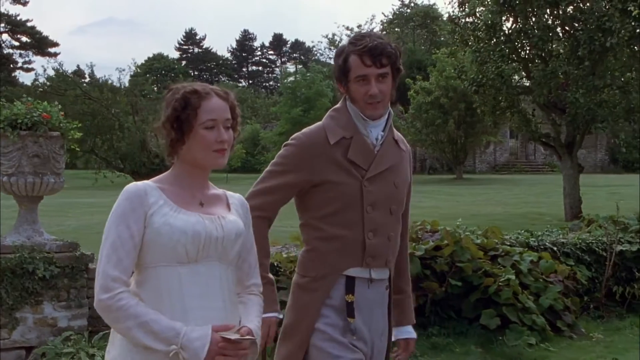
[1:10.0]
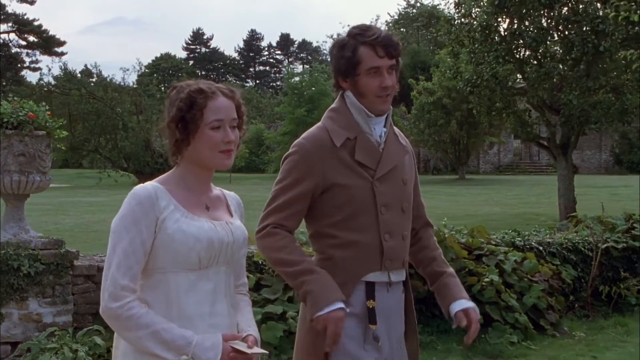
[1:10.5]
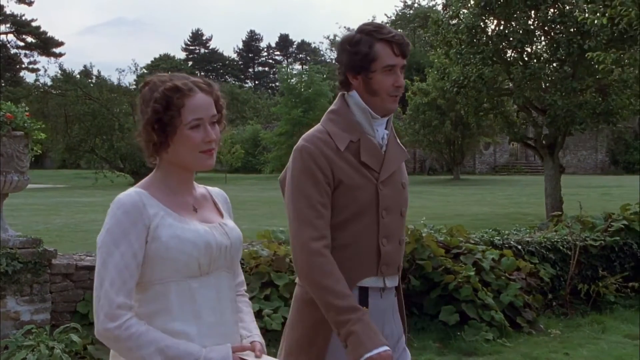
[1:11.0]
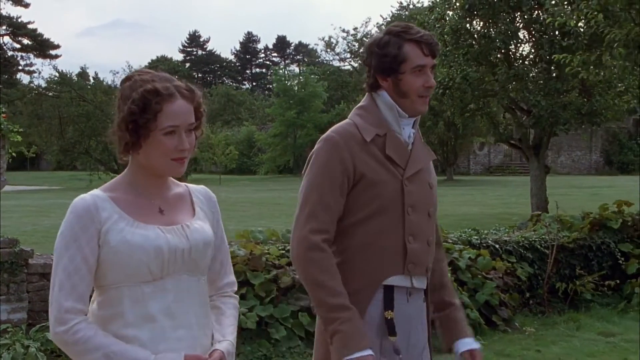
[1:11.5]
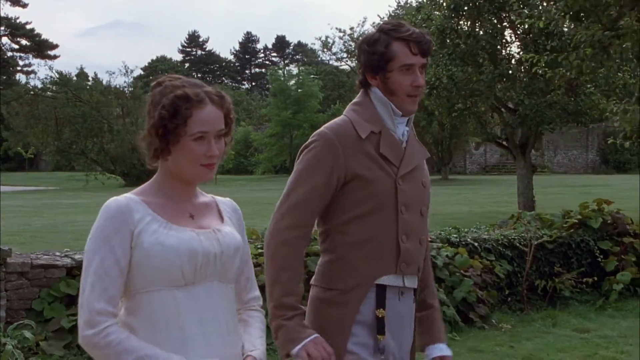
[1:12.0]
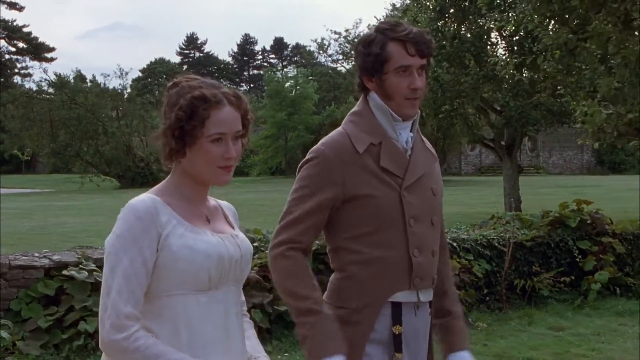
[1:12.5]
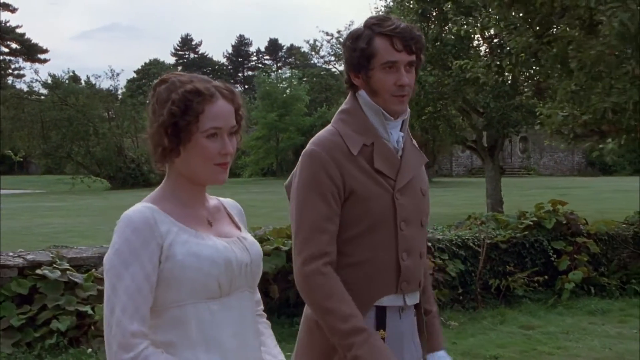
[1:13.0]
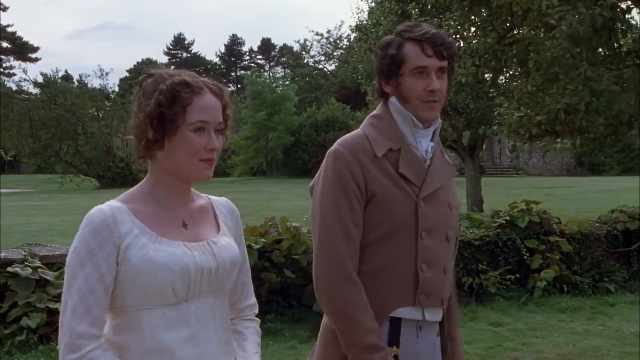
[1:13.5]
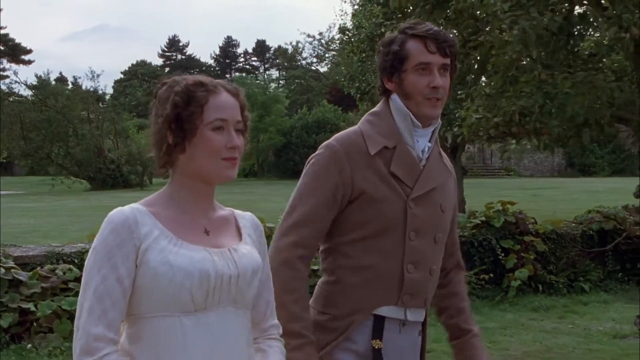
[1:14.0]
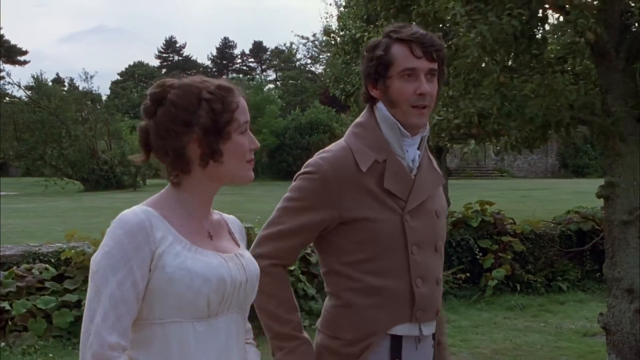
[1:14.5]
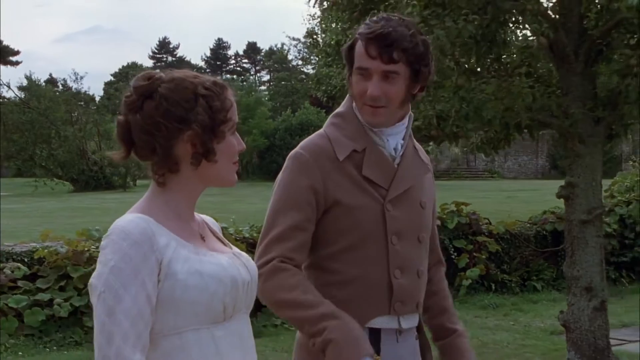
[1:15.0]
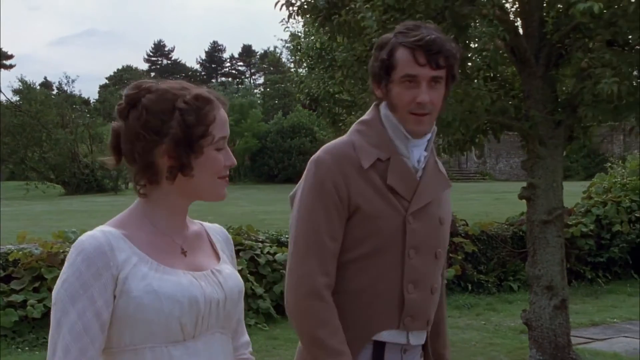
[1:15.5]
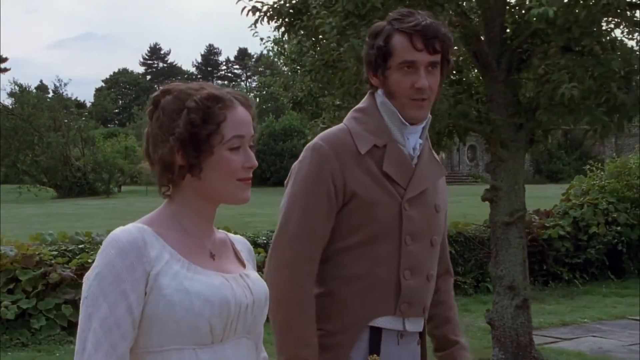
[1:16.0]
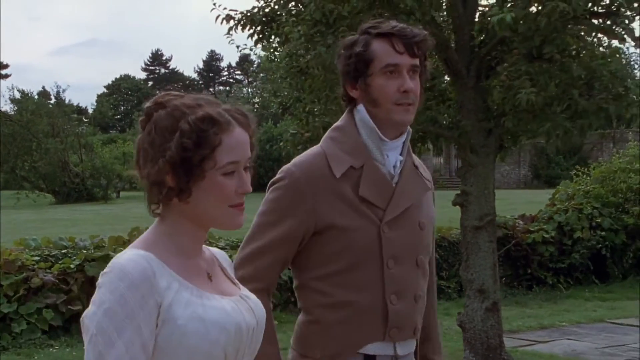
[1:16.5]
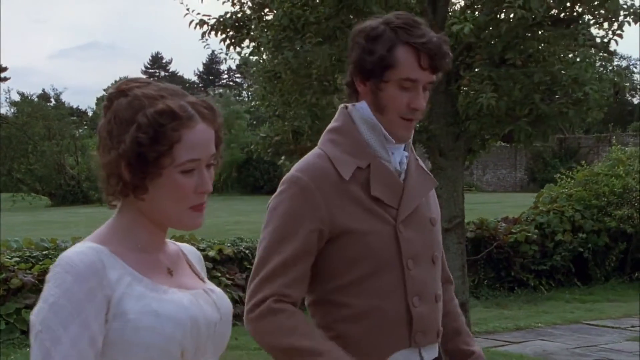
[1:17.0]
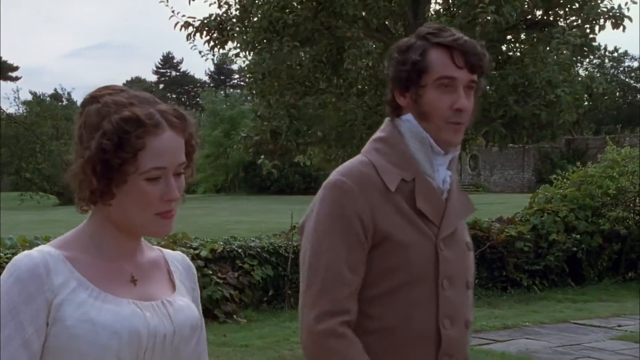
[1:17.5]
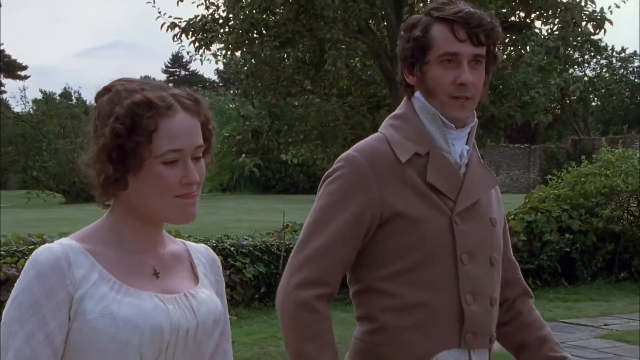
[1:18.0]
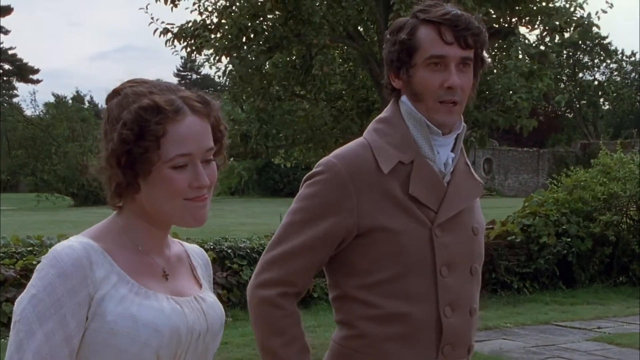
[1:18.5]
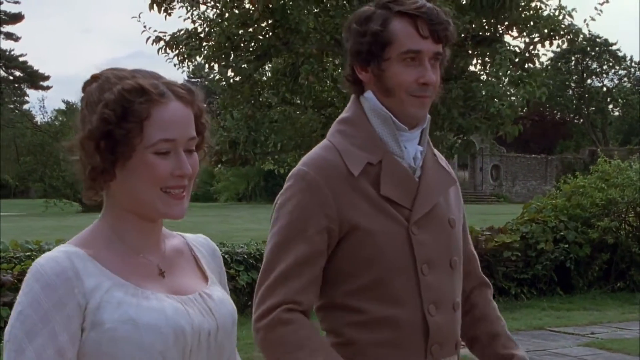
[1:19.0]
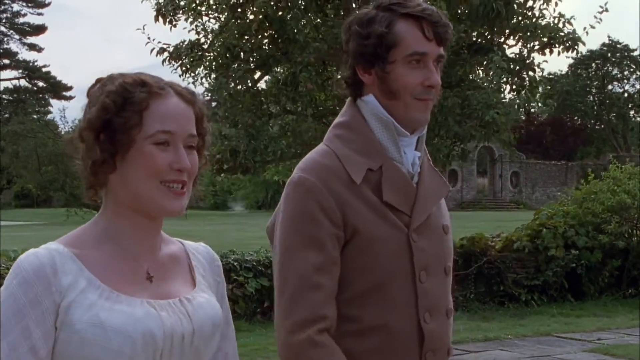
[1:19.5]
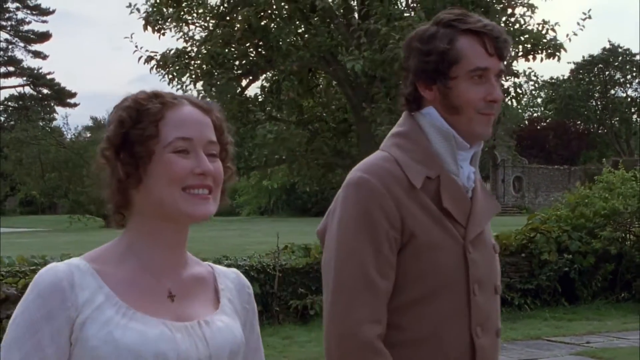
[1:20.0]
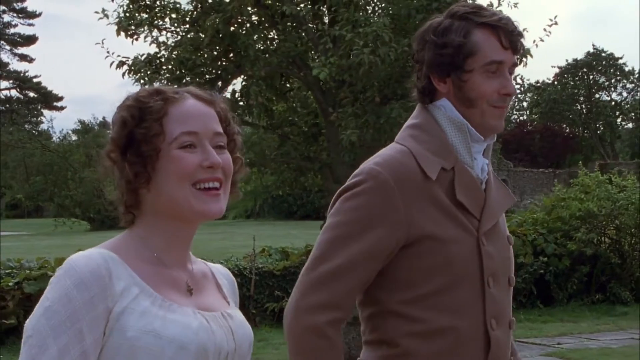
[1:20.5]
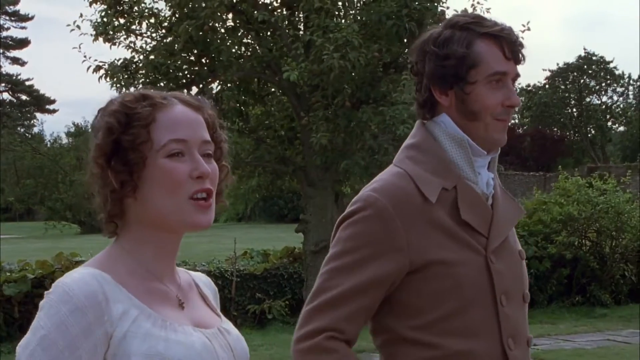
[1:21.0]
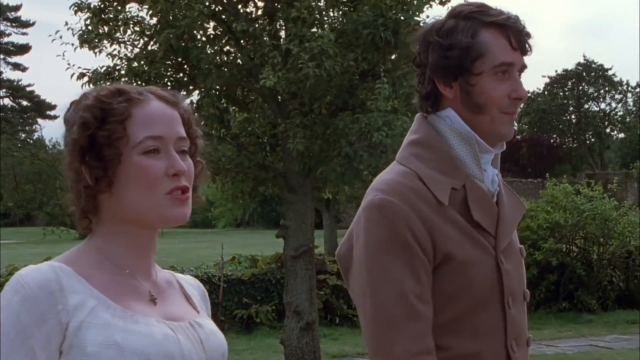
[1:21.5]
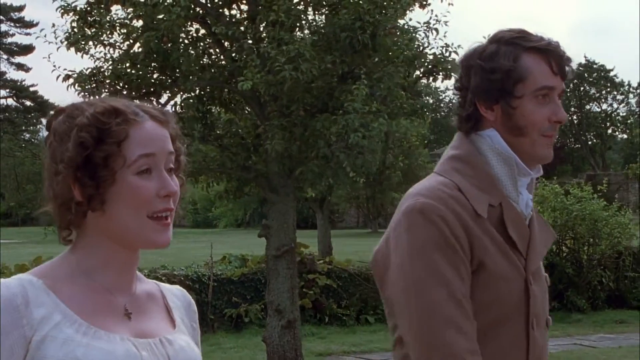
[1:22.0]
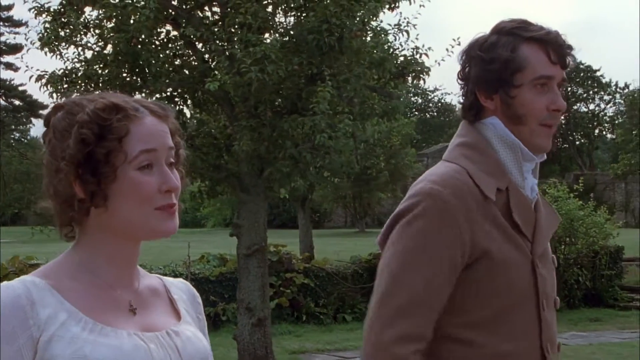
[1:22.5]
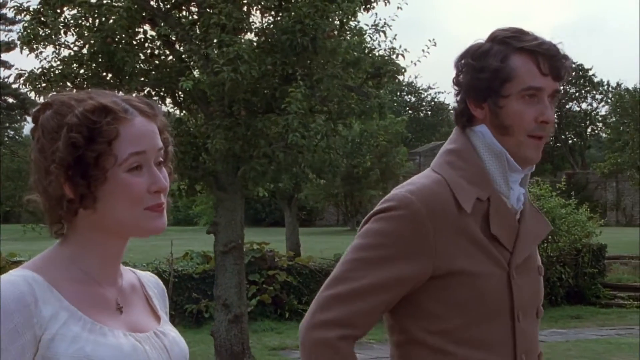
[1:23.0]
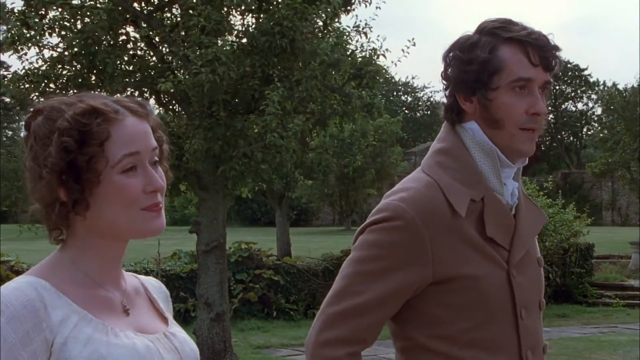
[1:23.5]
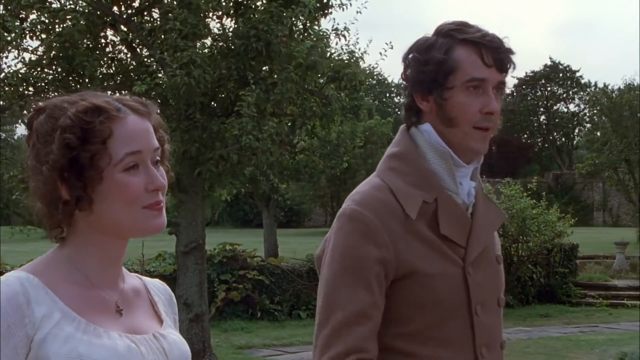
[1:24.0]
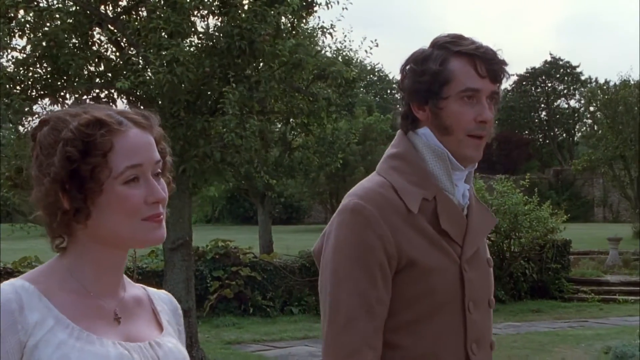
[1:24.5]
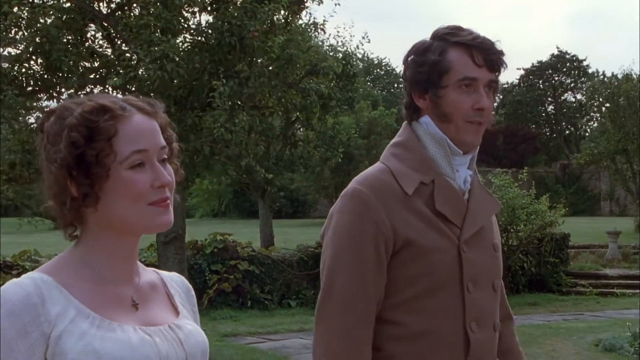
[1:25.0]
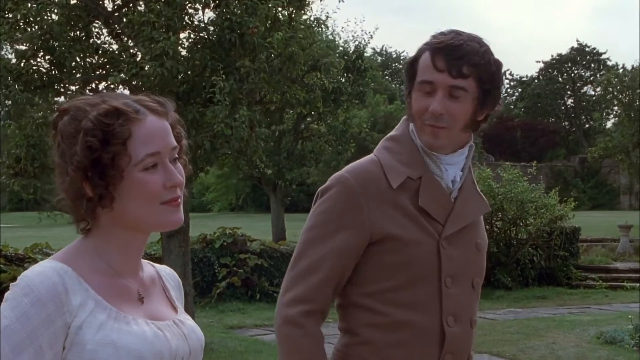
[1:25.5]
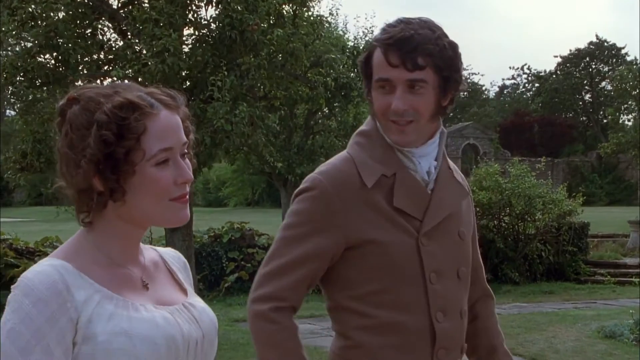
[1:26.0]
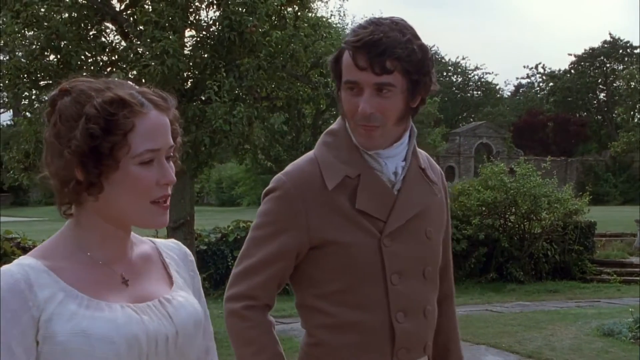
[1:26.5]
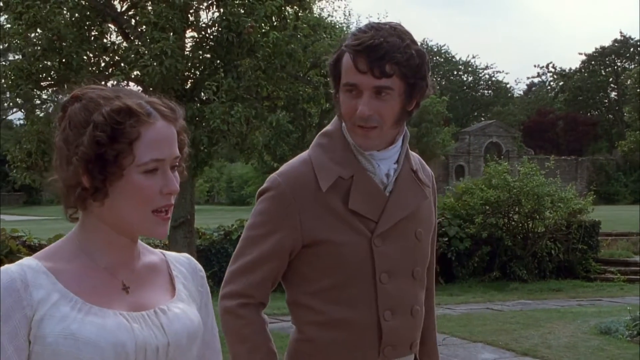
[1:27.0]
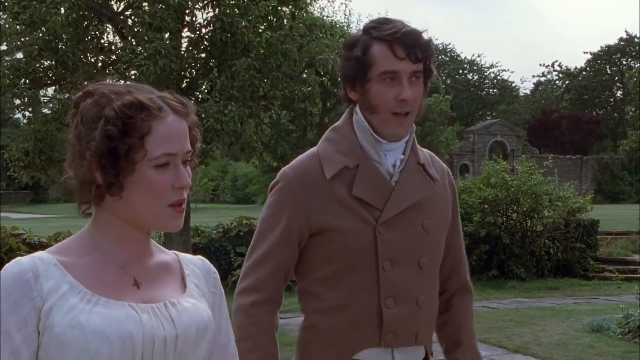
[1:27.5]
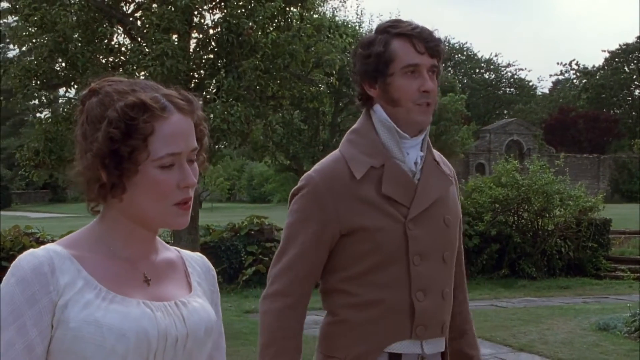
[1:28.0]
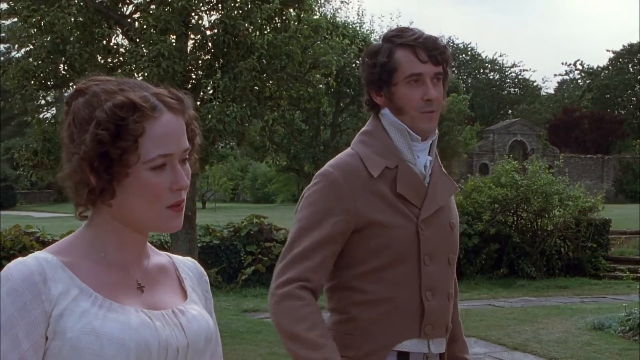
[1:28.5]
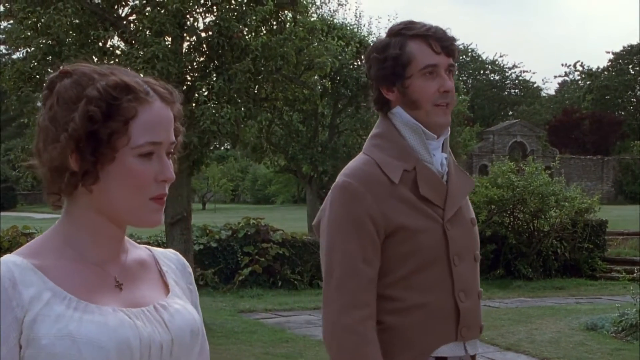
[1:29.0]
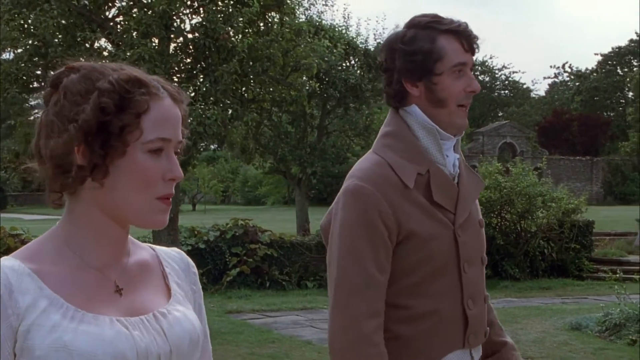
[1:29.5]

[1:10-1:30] The man and the woman walk toward the building, apparently going back inside, still talking while the lady smiles. She wears a chain with a pendant that looks like a kind of cross. The man uses a walking stick. There are flower vases toward the inside of the building. The attire, including a cowboy-style long jacket, is not a modern design and seems to suggest an older era, like the 60s.